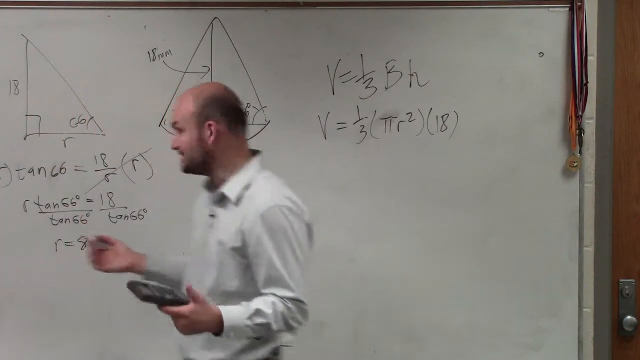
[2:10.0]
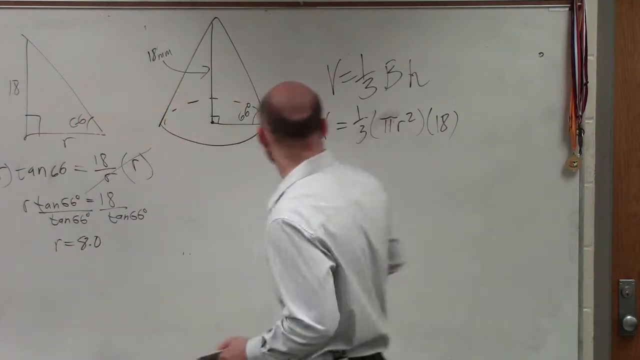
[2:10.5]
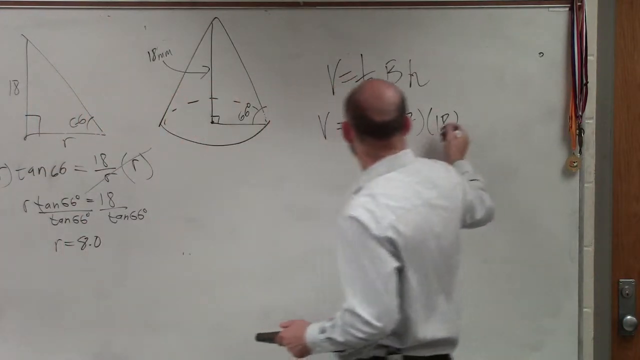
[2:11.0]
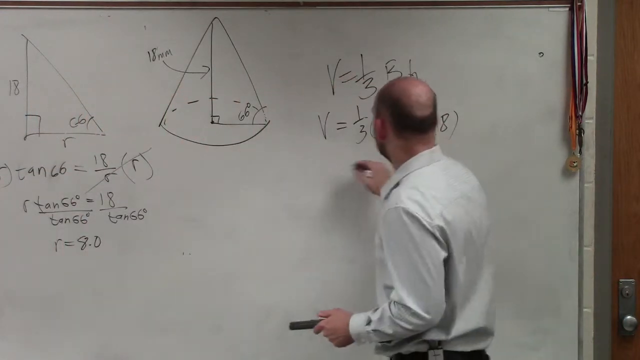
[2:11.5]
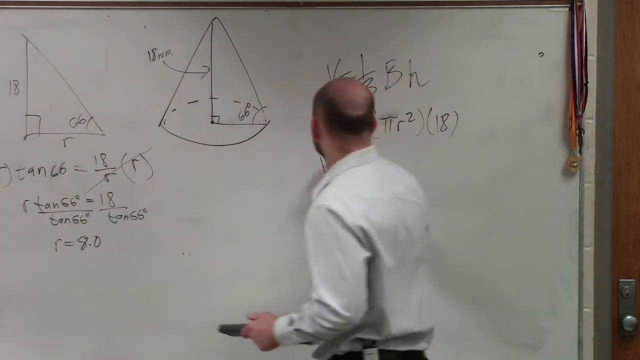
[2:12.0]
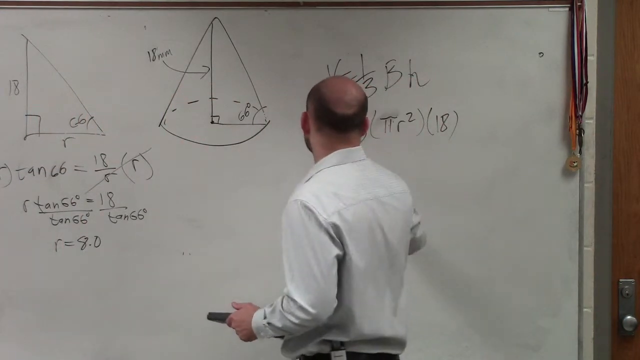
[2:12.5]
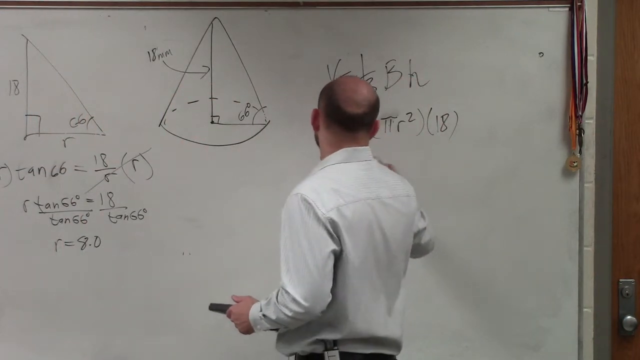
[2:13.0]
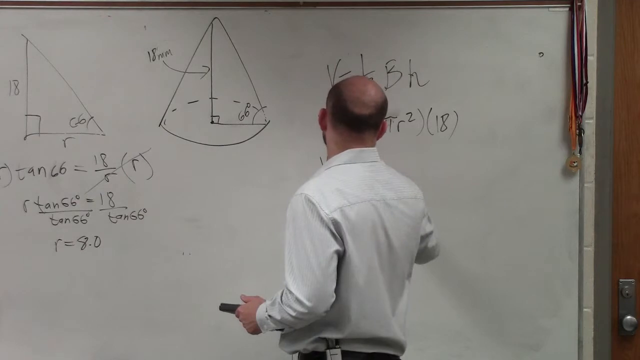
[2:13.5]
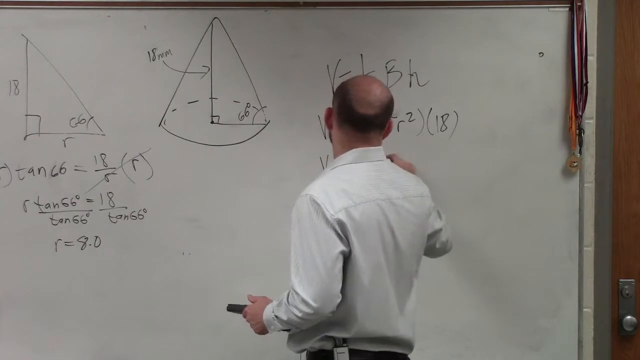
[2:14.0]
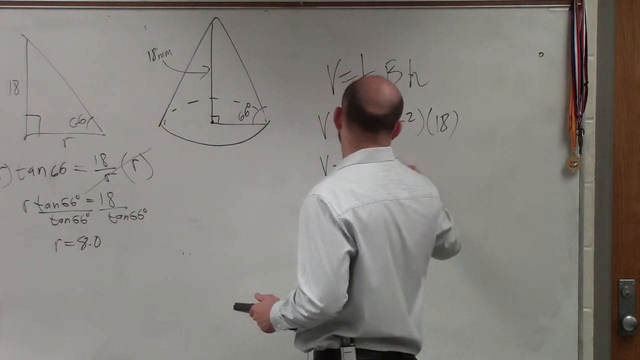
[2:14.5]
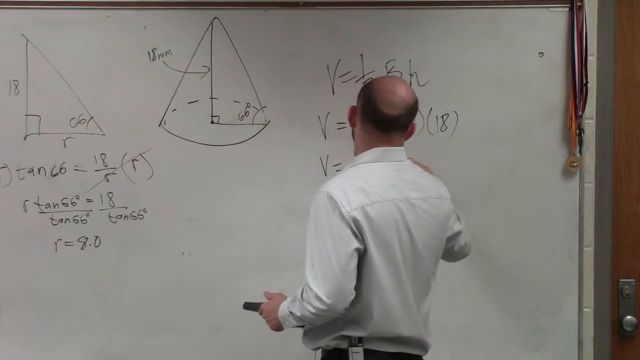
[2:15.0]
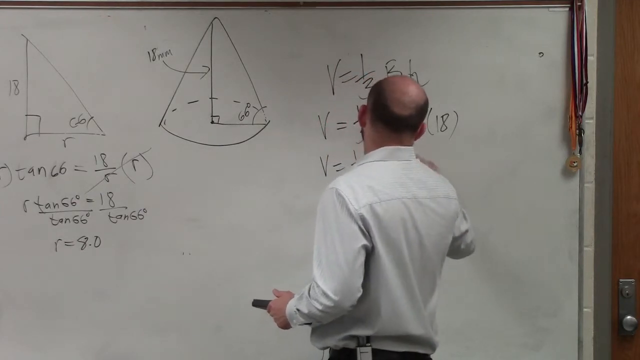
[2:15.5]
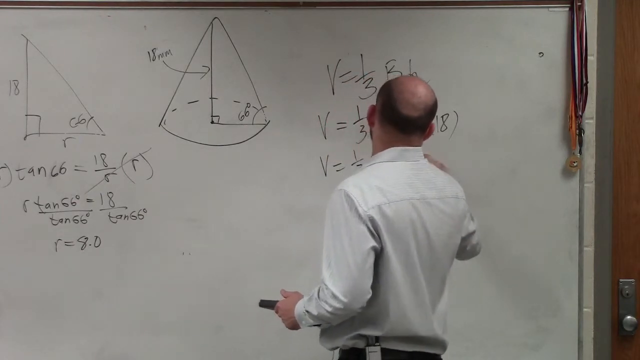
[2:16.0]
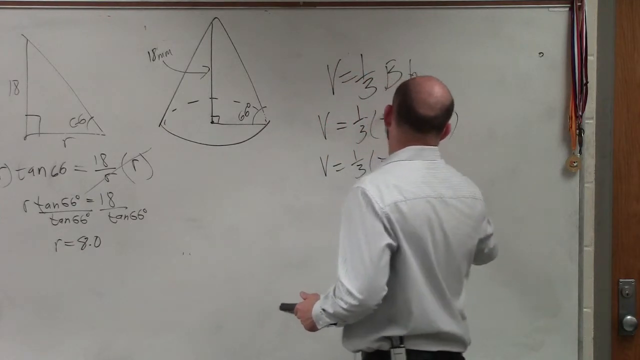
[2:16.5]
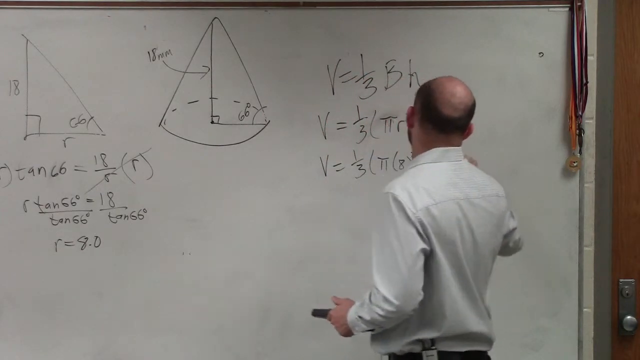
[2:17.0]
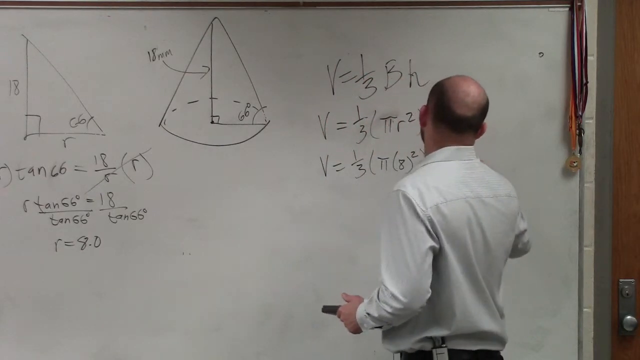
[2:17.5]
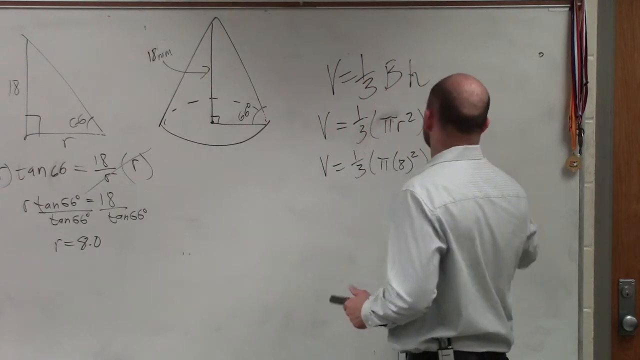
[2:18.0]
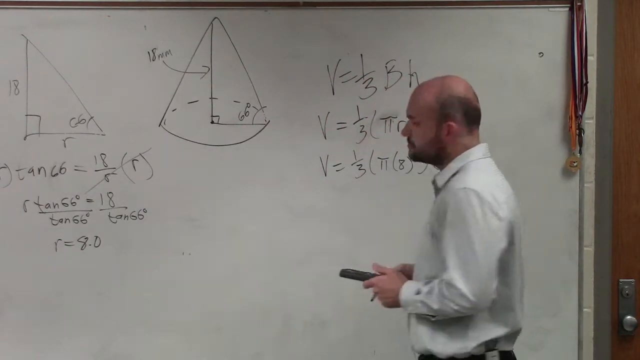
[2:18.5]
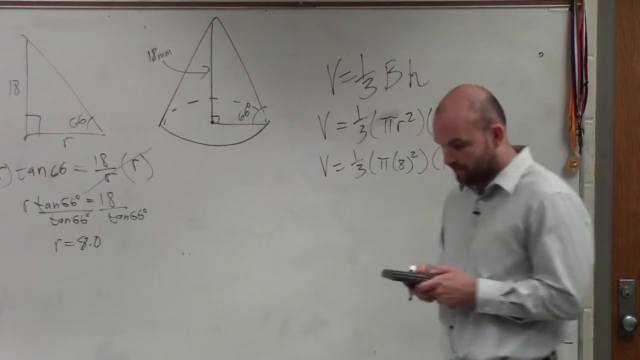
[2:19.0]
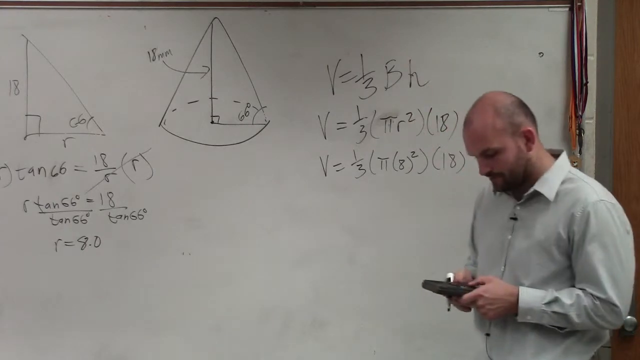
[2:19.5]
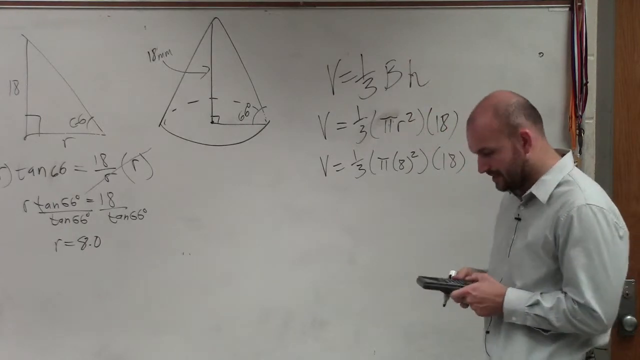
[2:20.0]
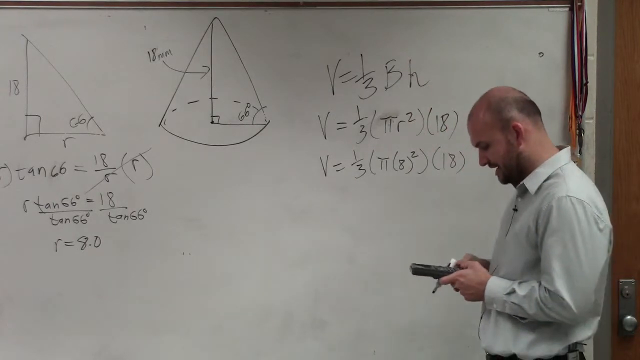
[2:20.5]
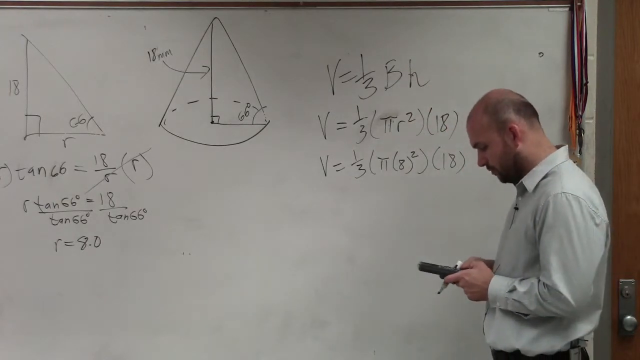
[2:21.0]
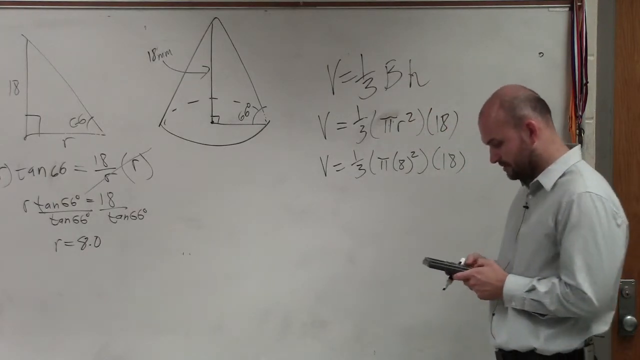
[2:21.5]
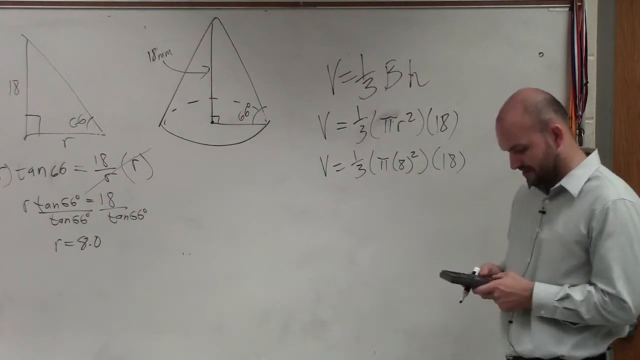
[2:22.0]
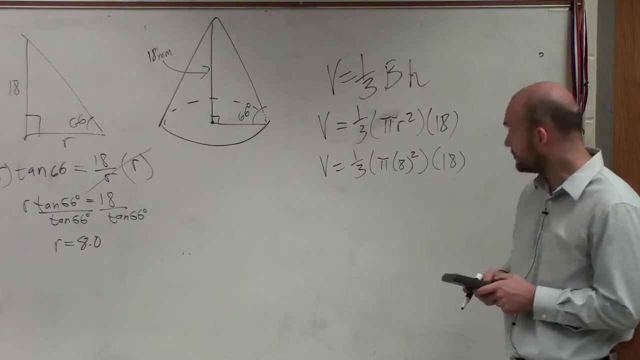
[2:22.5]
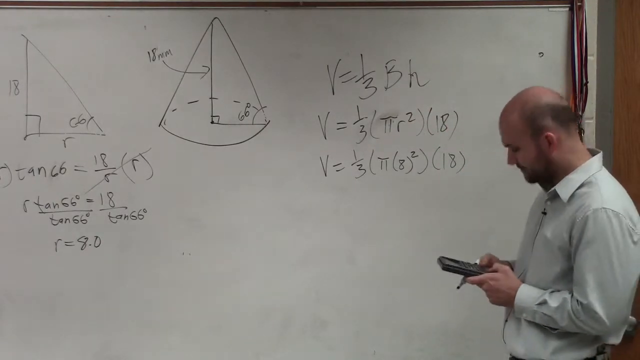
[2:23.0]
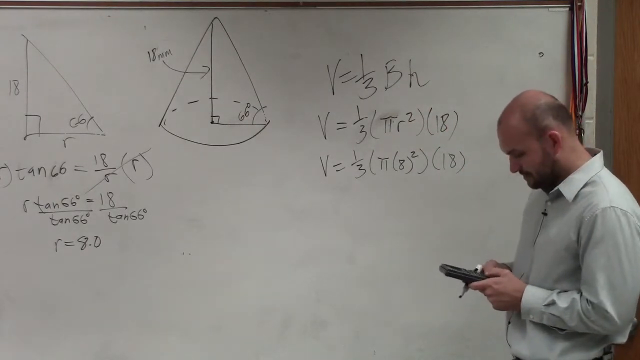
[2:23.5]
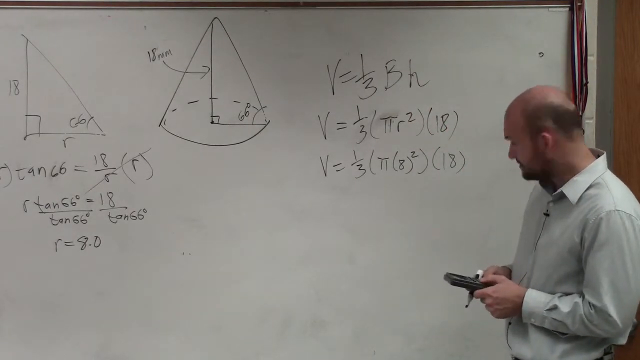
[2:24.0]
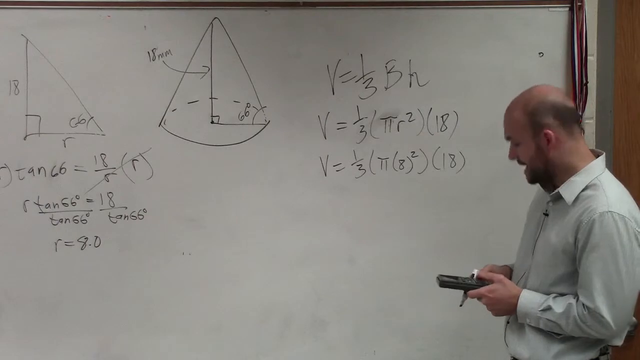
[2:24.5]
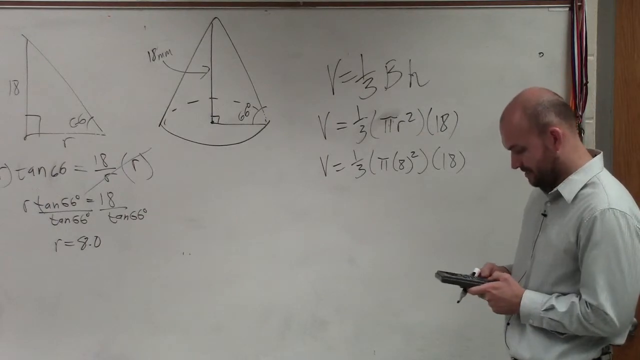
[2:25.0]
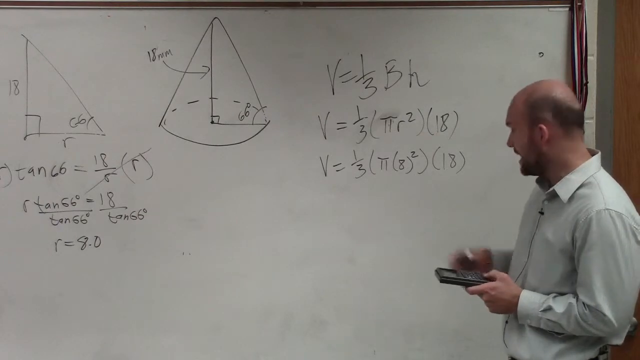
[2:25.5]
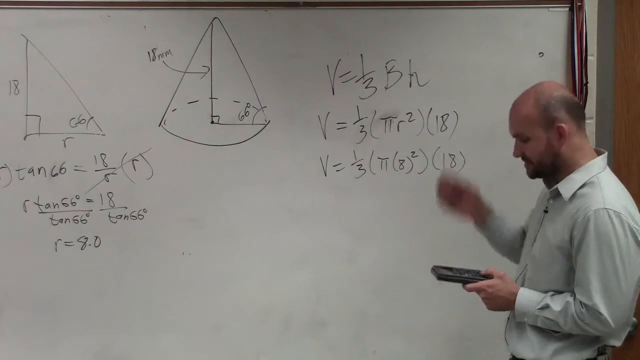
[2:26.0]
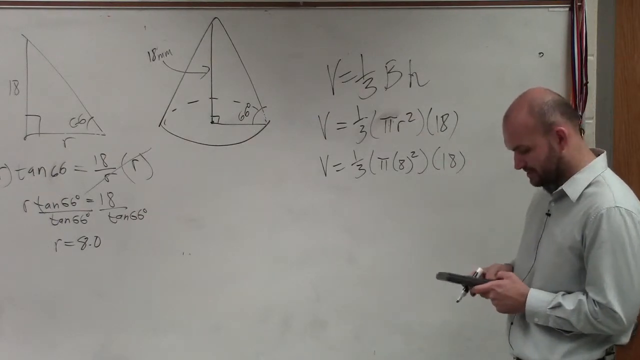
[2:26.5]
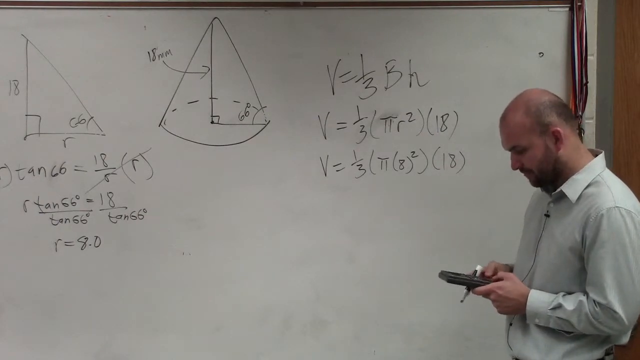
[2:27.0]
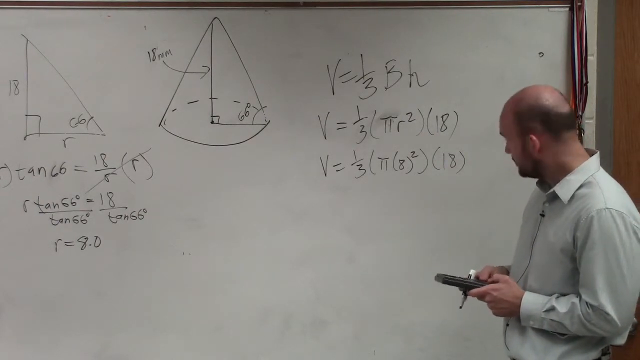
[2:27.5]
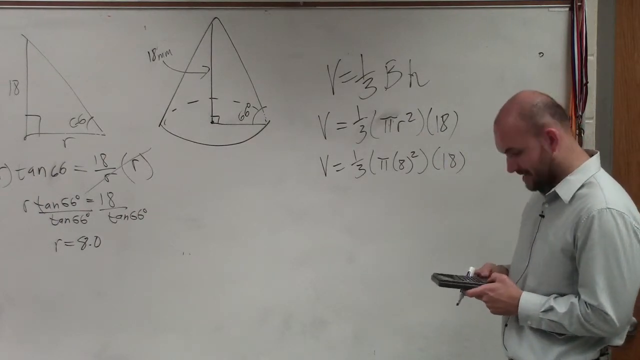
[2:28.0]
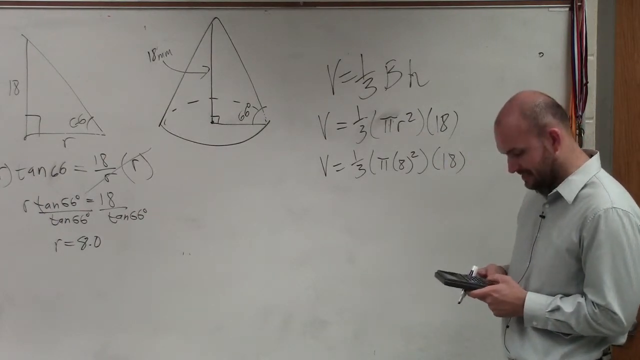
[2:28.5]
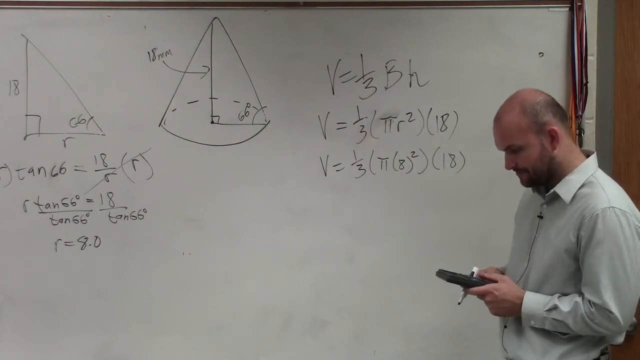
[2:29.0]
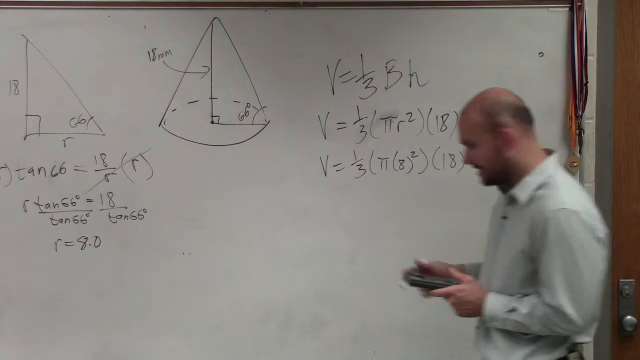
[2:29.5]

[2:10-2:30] With his back to the classroom again, the man writes on the right-hand side of the whiteboard, writing with his right hand and holding his calculator in his left. He has written V equals one-third (pi)(eight) squared, alongside V equals one-third pi r squared with an 18 in parentheses. He enters numbers into his graphing calculator while talking. As the shot ends he is getting ready to write the results from his calculator onto the board. All the previous notations and parts of the equation are still visible on the board. He stands at the far right of the board and the far right of the frame, still talking and gesturing with his hands.